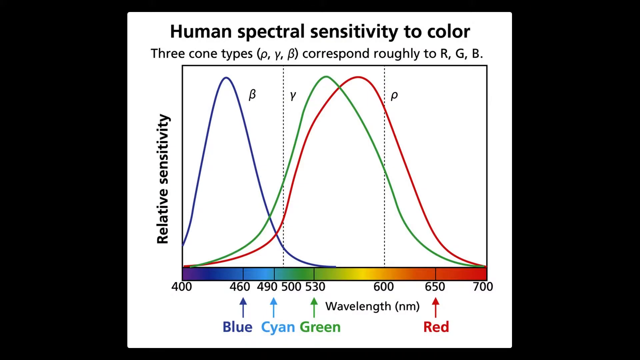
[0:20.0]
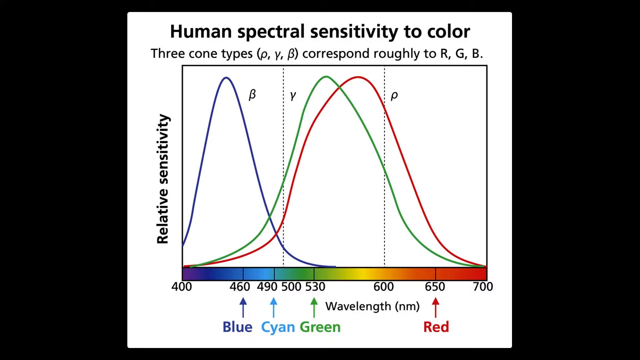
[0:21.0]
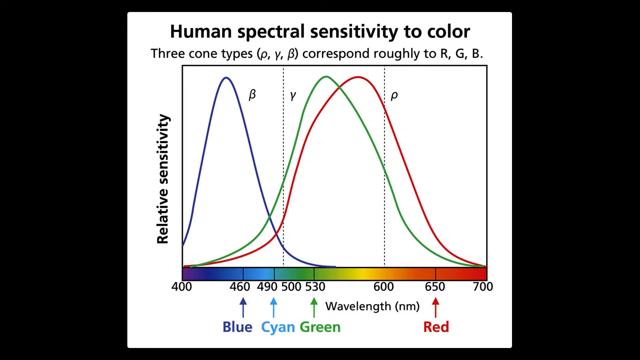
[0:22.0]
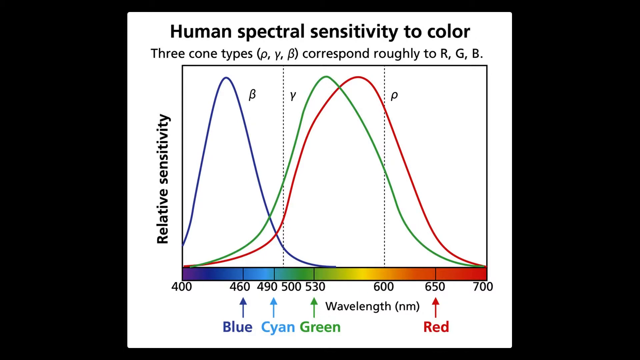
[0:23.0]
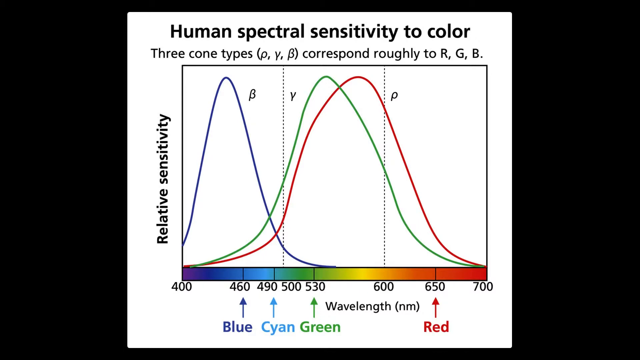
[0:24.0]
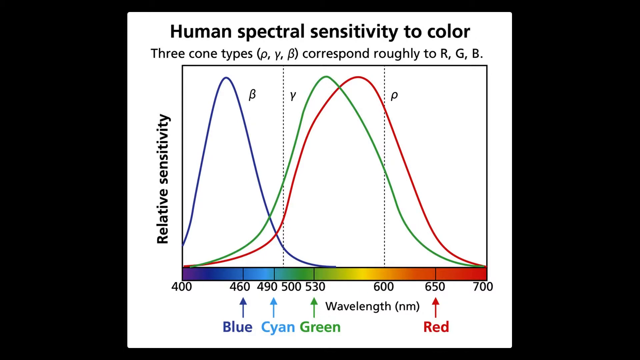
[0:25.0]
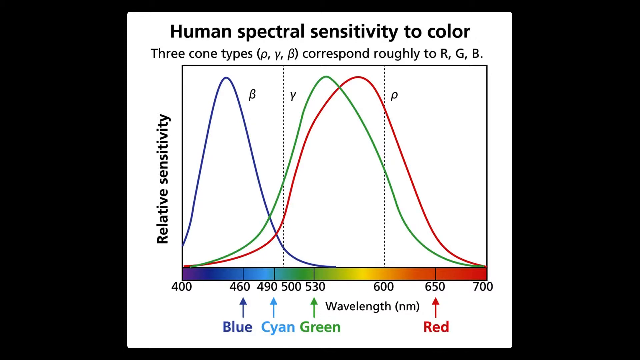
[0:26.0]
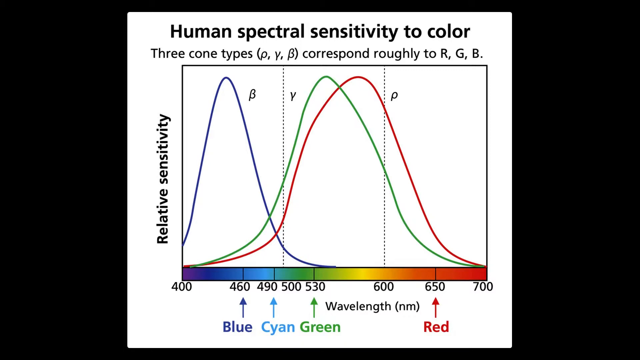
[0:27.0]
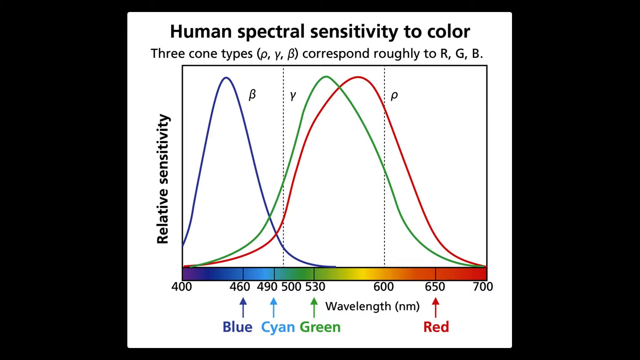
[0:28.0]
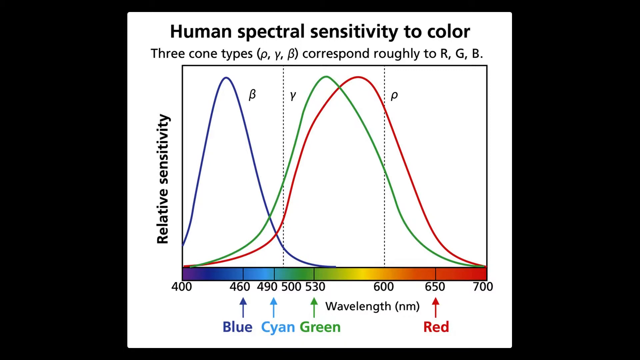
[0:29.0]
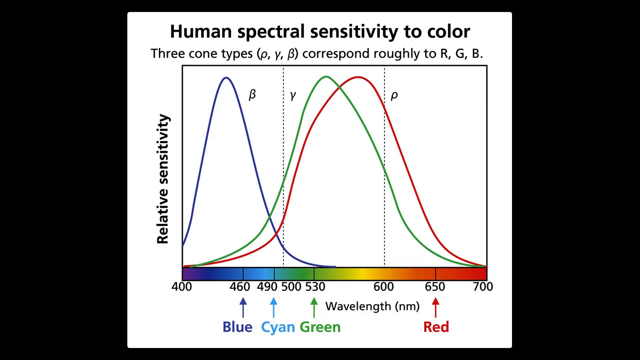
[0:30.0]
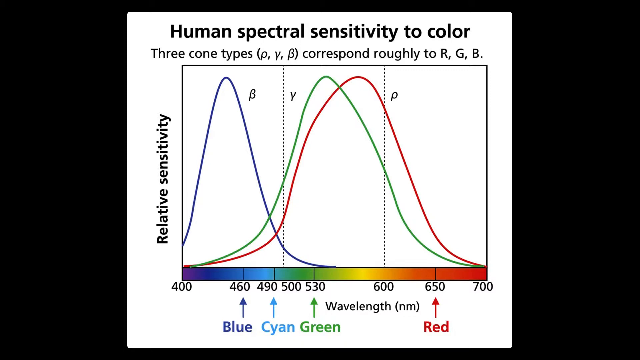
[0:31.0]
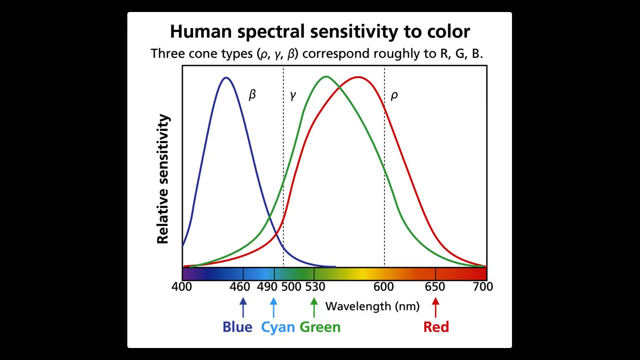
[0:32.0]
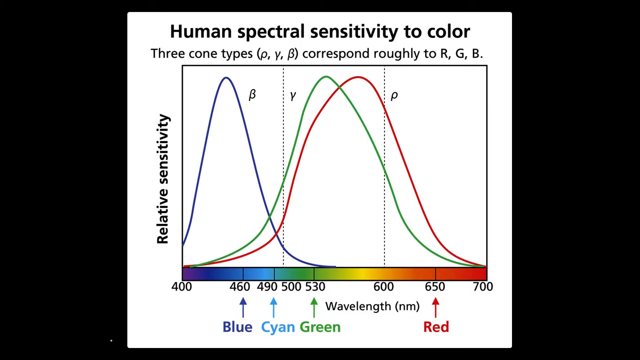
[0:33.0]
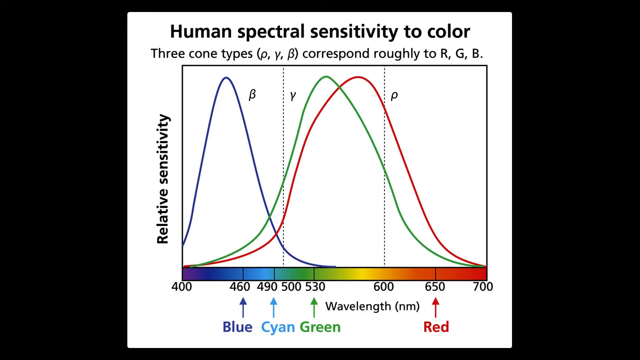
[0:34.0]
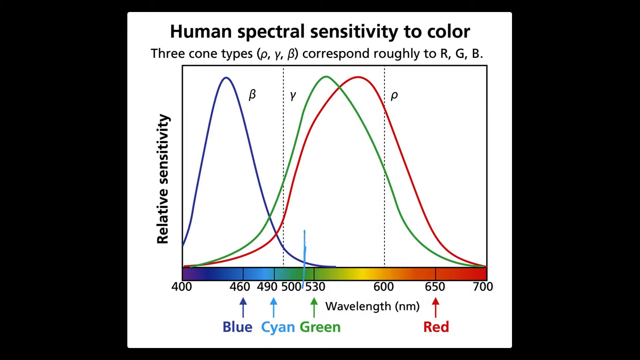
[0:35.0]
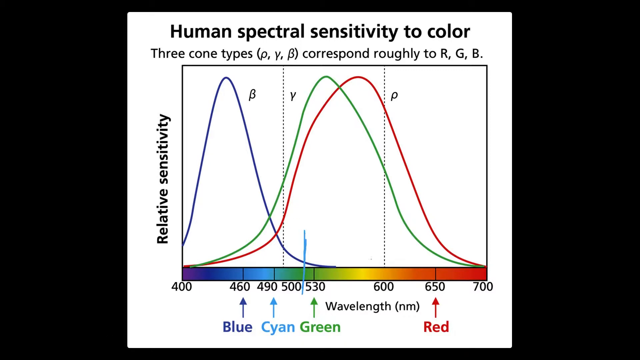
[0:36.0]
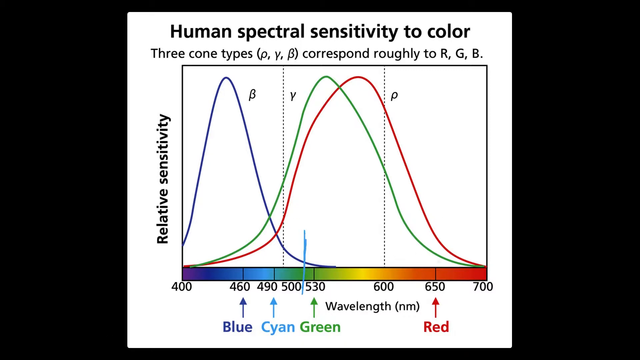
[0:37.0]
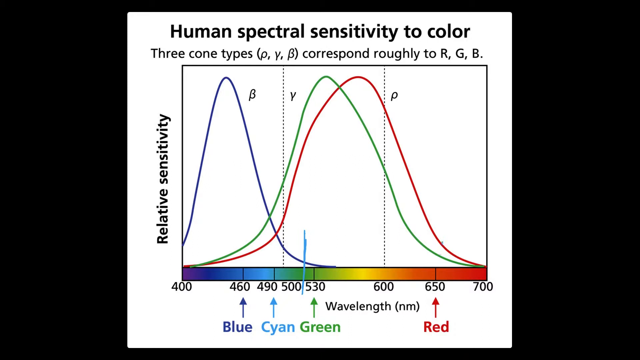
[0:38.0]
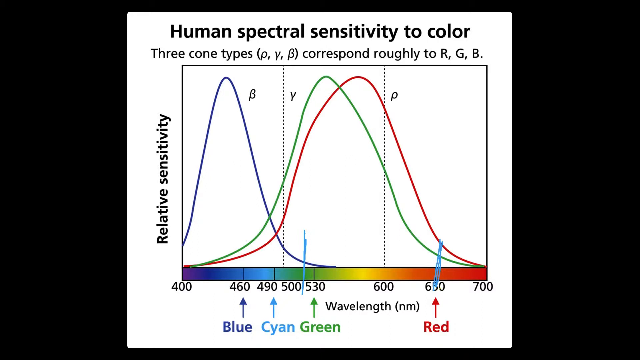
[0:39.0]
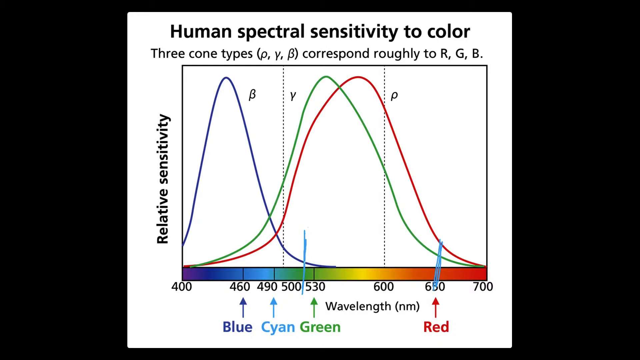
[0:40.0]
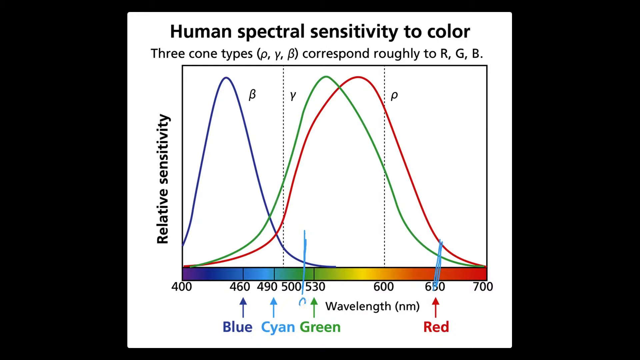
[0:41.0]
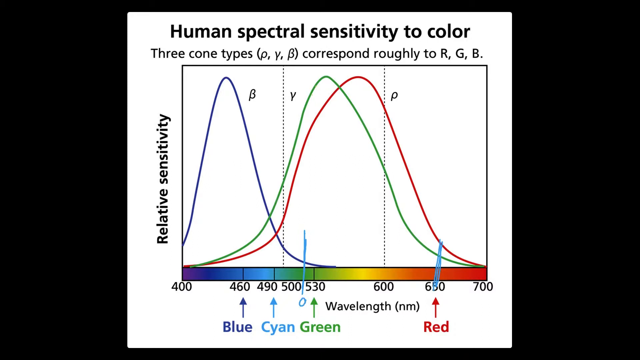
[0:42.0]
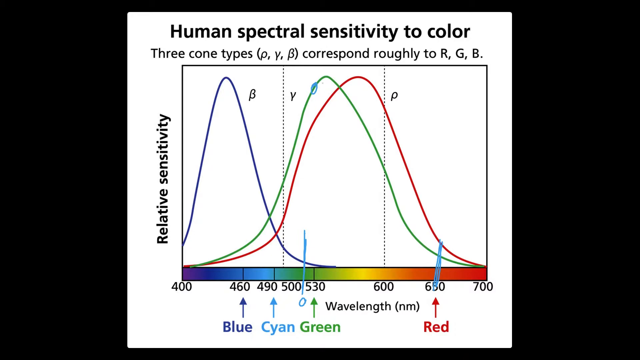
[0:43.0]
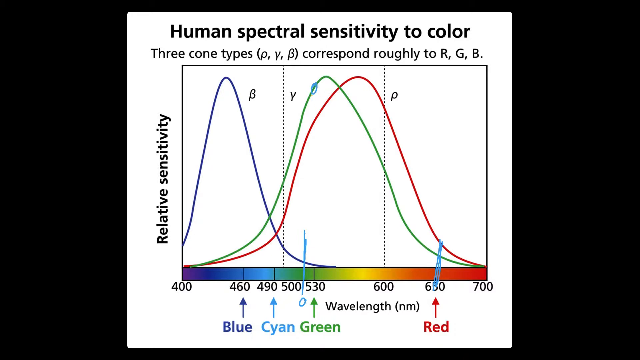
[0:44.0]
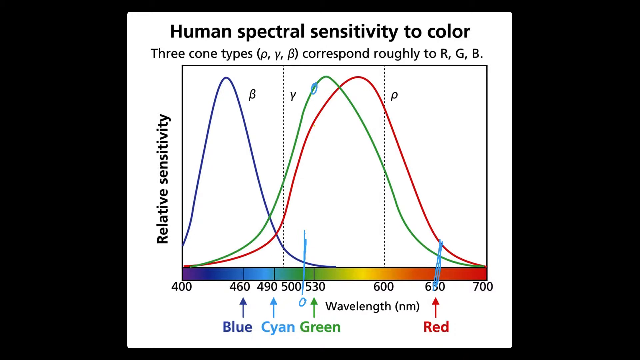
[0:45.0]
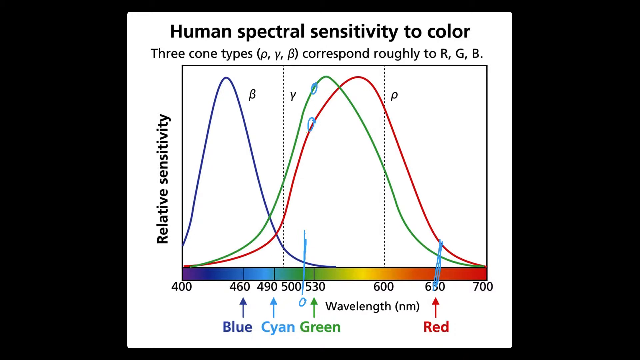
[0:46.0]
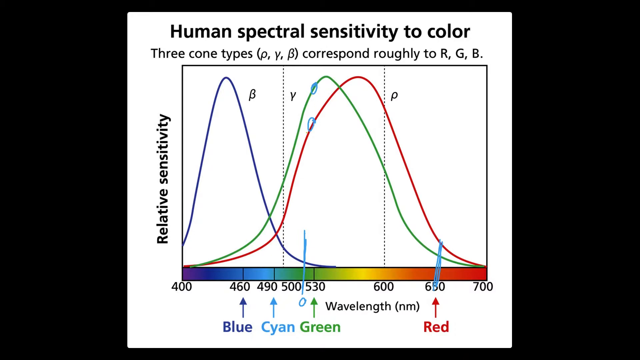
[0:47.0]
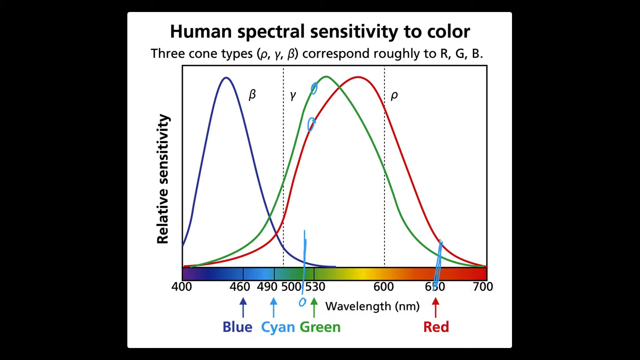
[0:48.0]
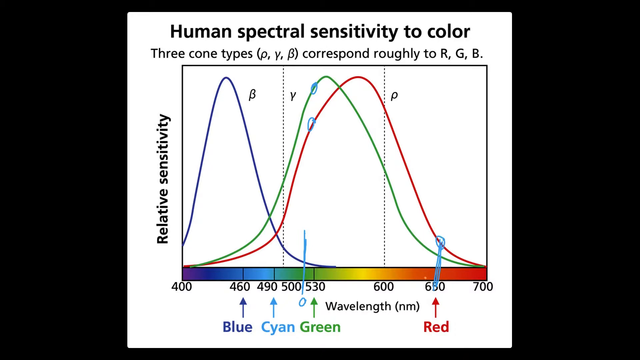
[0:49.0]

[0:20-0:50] The diagram shows human spectral sensitivity to color, with three types corresponding roughly to different wavelengths. The wavelengths come together in different combinations to create color gradients, including orange and yellow, across the color spectrum shown on the screen, relative to the sensitivity displayed. The diagram has arrows at the bottom of the screen.